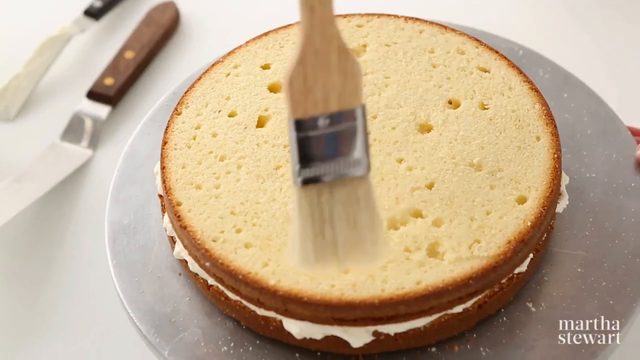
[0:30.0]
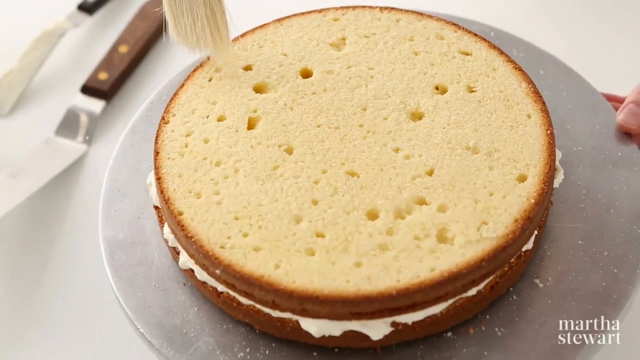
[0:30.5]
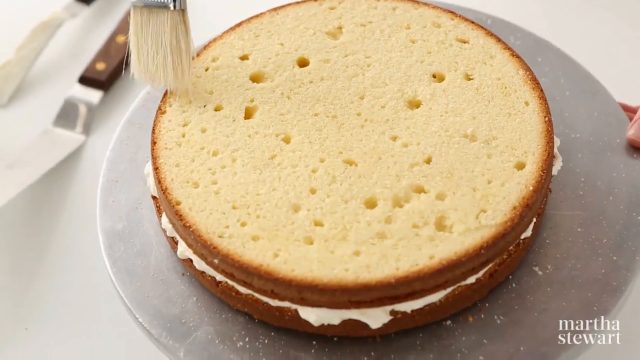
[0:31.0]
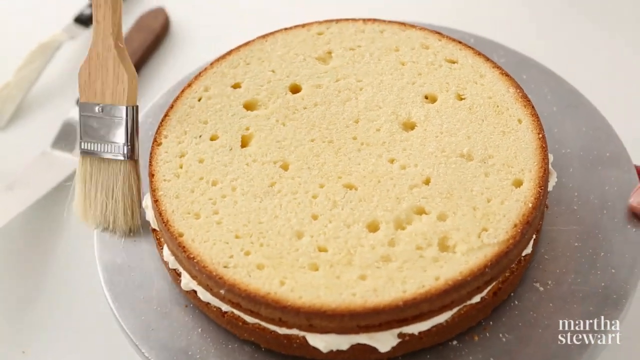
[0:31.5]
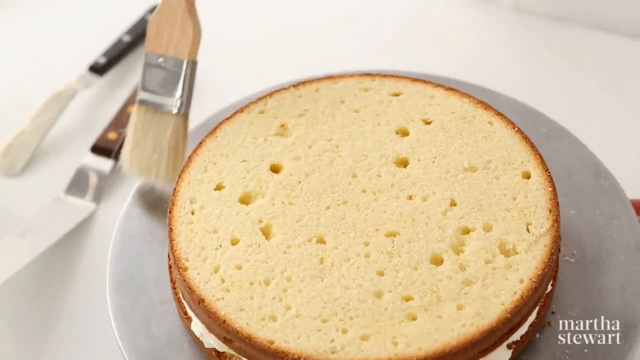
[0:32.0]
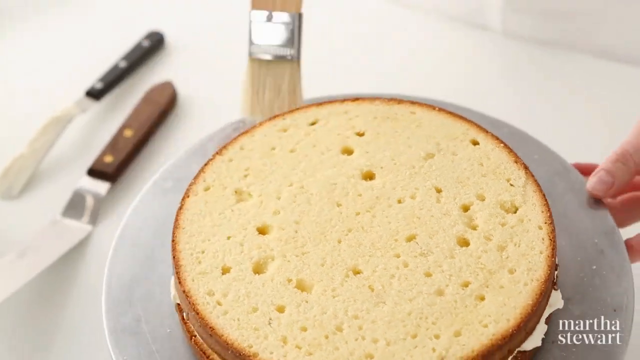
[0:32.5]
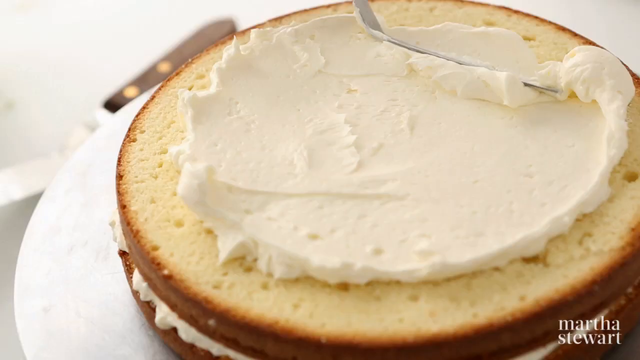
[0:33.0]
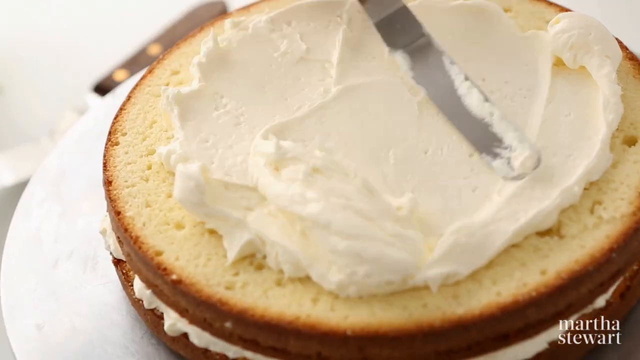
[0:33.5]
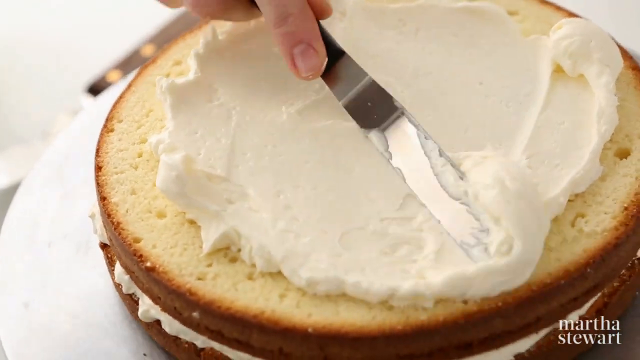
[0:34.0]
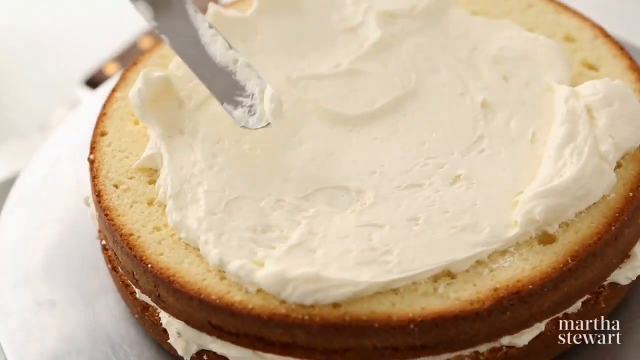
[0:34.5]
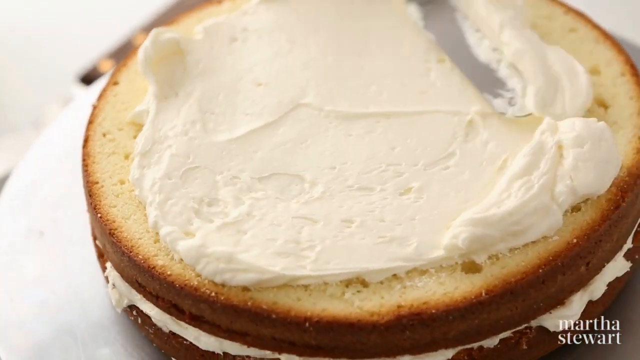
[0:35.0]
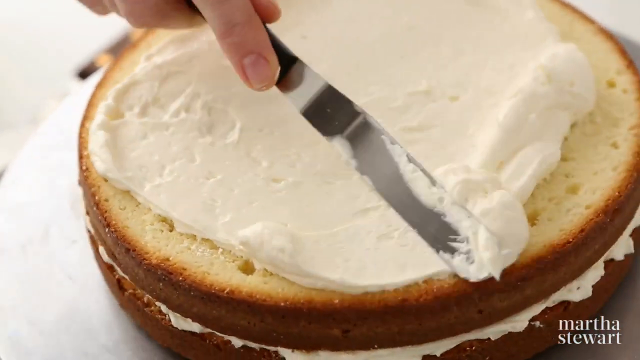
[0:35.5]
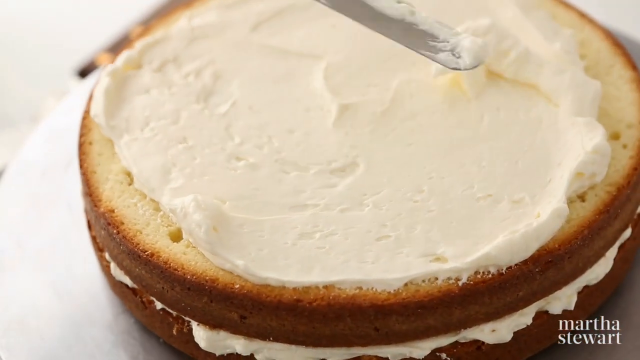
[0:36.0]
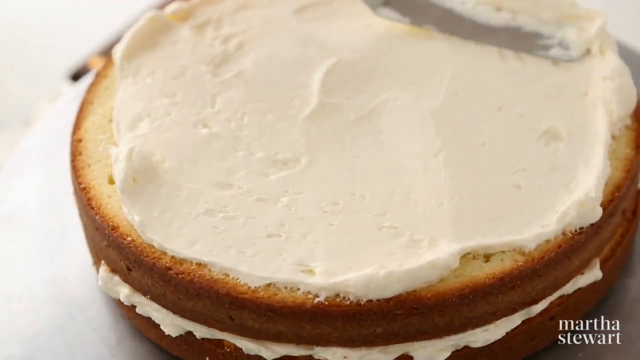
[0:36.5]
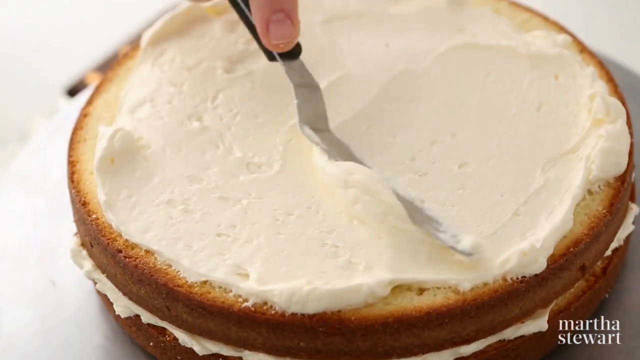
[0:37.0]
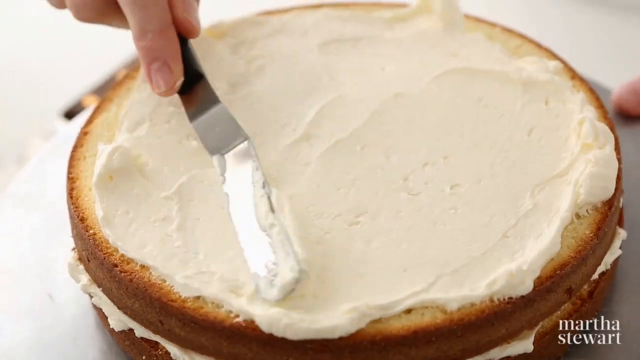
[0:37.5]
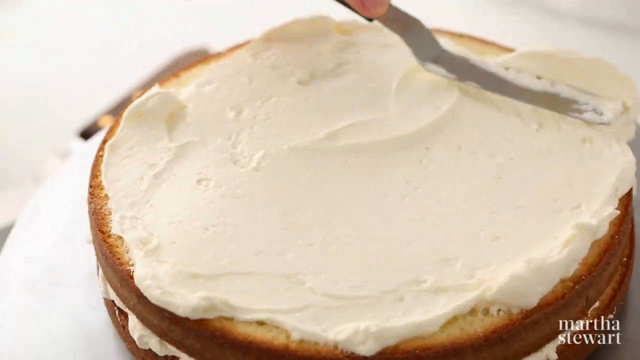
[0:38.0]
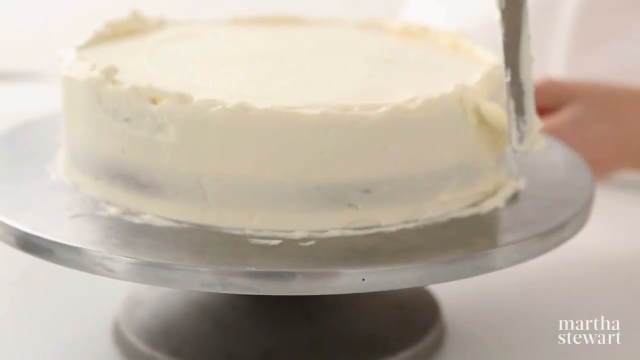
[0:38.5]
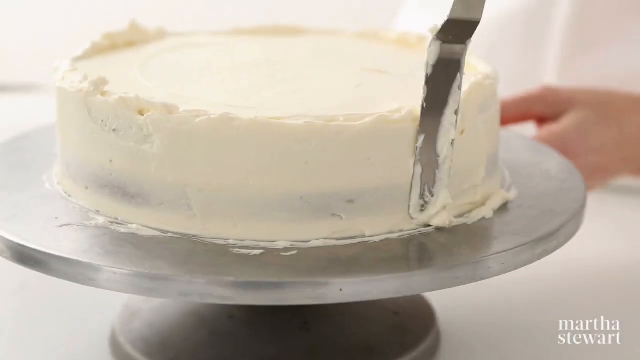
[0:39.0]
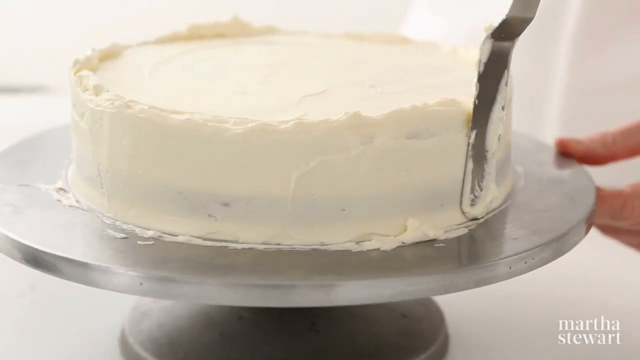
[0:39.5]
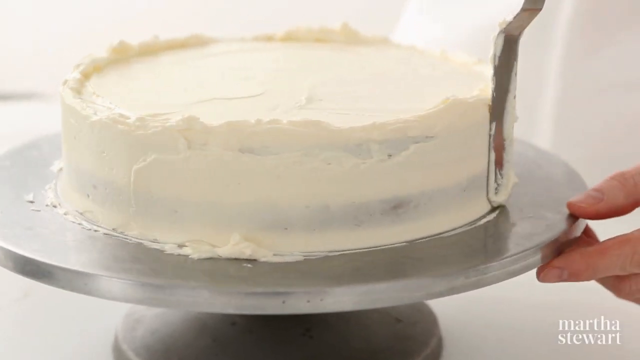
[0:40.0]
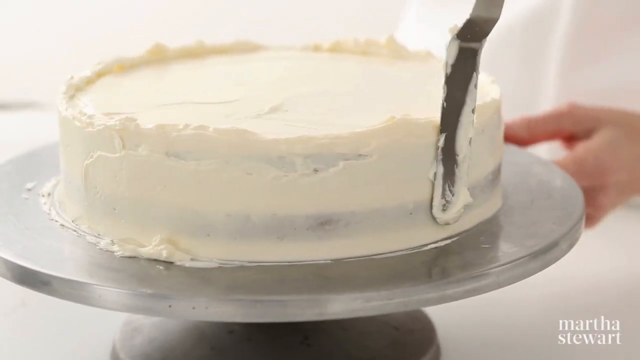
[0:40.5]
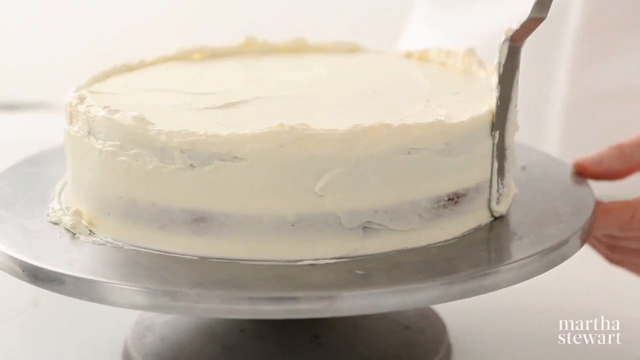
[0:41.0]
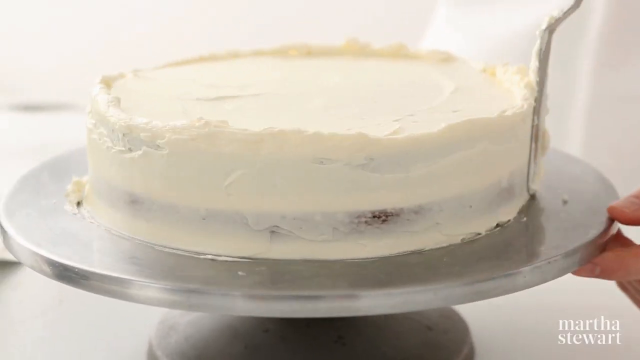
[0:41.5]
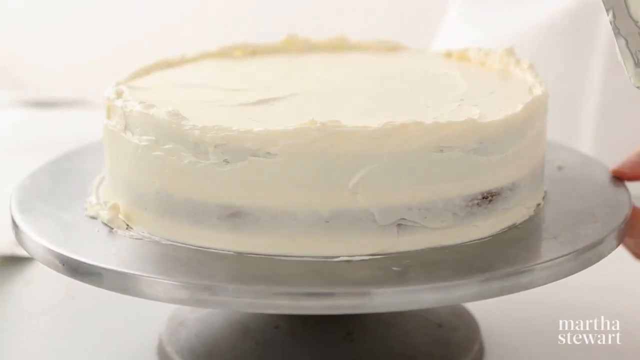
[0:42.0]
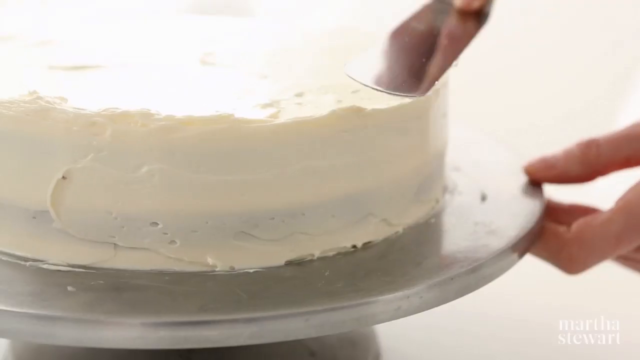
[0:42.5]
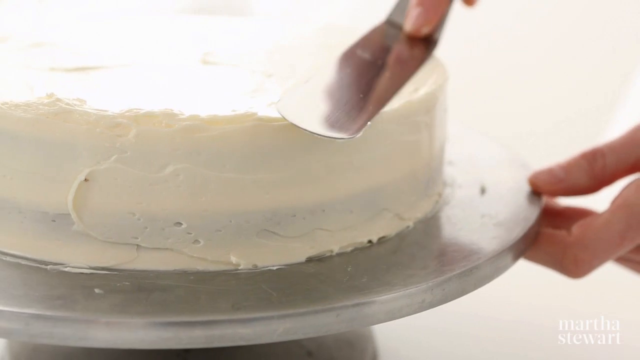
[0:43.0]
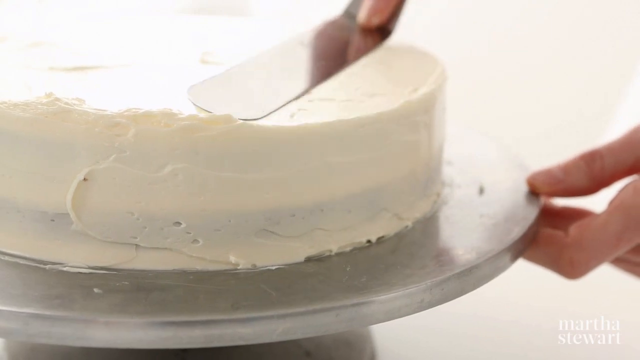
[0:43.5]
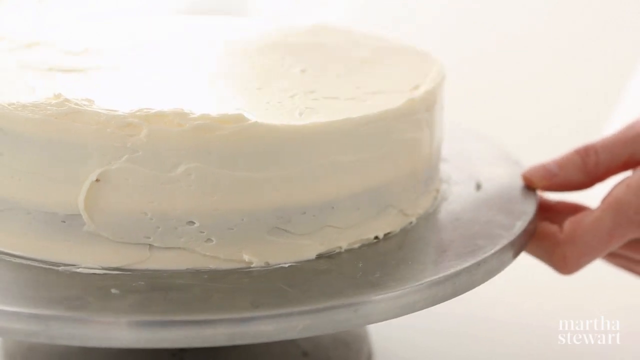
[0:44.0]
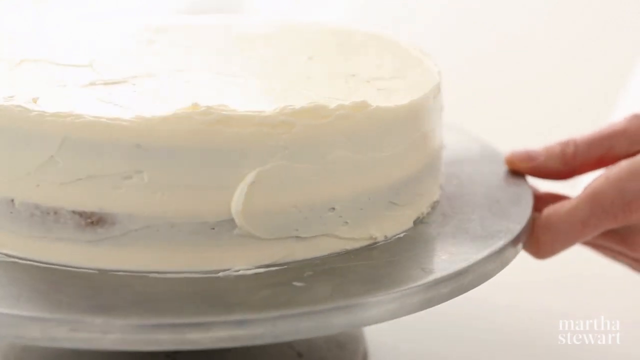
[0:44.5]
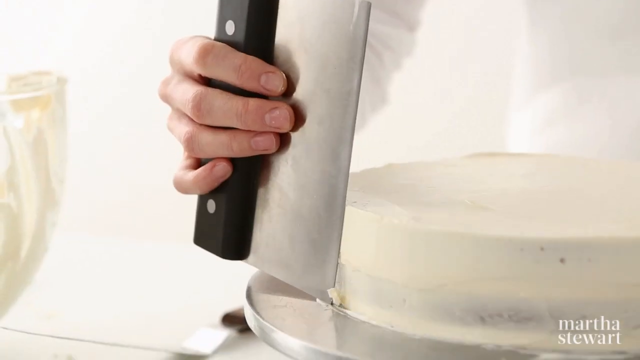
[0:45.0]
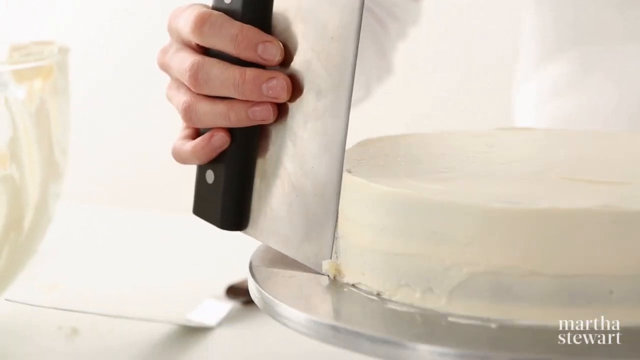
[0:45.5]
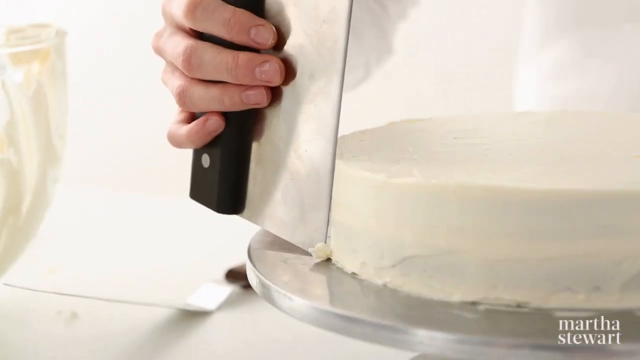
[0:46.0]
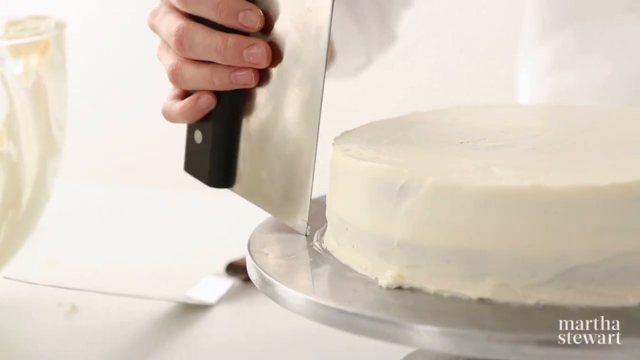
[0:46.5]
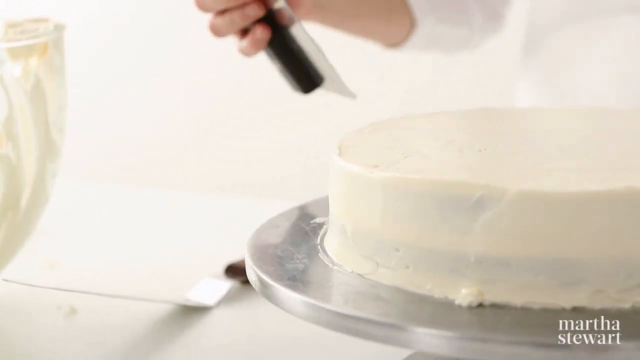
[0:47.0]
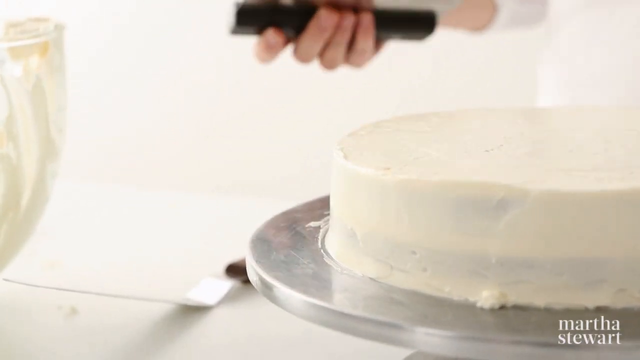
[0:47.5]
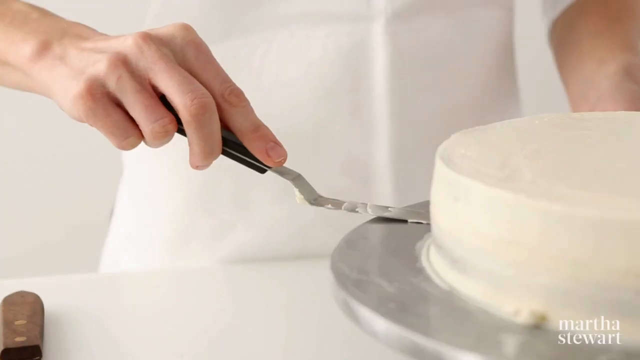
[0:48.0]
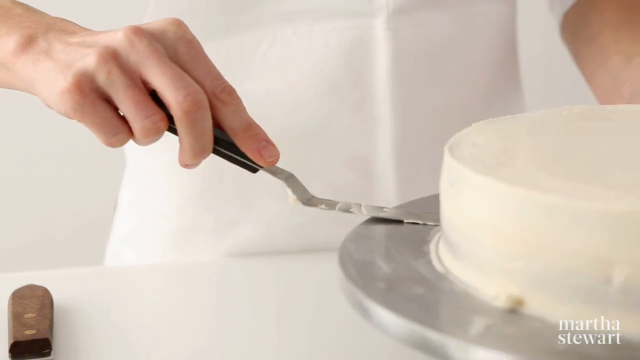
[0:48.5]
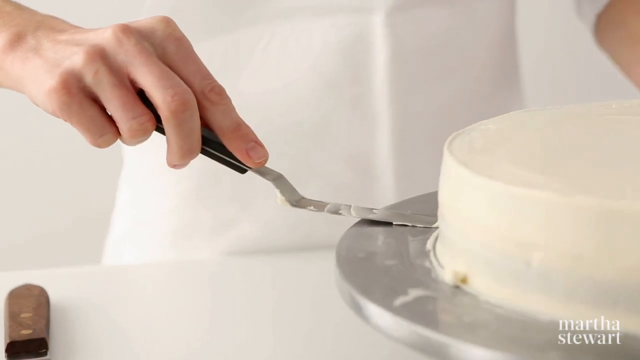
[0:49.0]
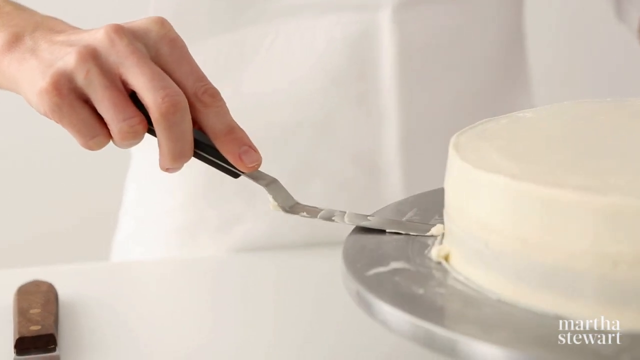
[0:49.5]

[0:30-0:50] What seems to be a tutorial on how to crumb coat a cake shows two vanilla sponge cakes cut into circular shapes, stacked in two layers with a lot of icing evenly coated between them. A brush is used to brush off the excess crumbs on the top layer of the cake. Another generous amount of icing is spread onto the second layer, this time not only on the top but also evenly distributed onto the sides. The baker, who wears a white apron or coat, carefully smooths out the icing all over the cake, making sure it is evenly distributed, and then cleans it up so the icing is perfect.